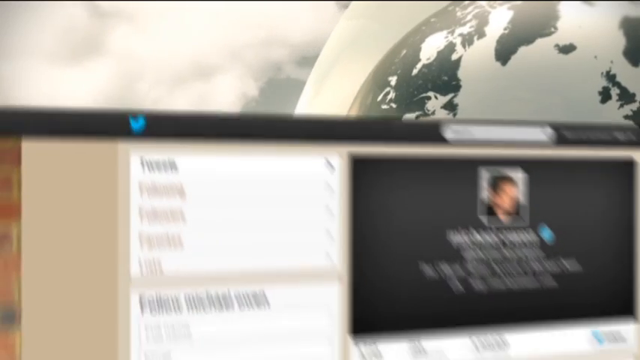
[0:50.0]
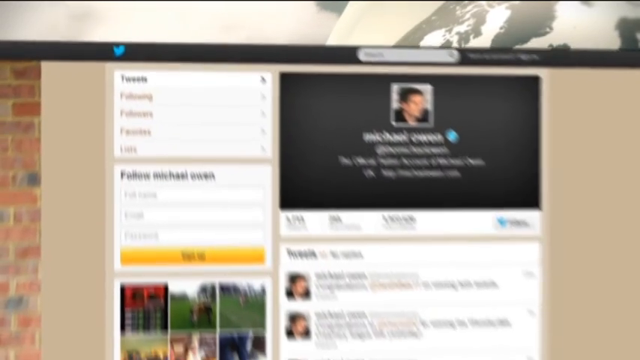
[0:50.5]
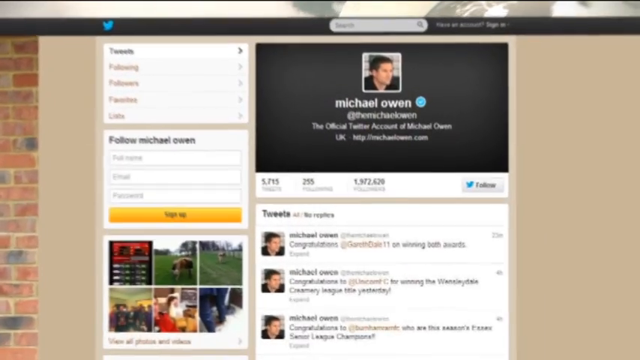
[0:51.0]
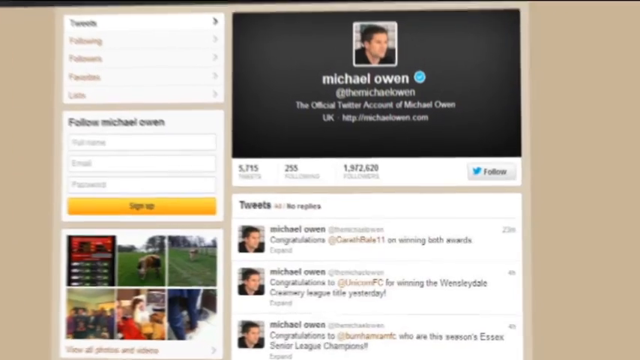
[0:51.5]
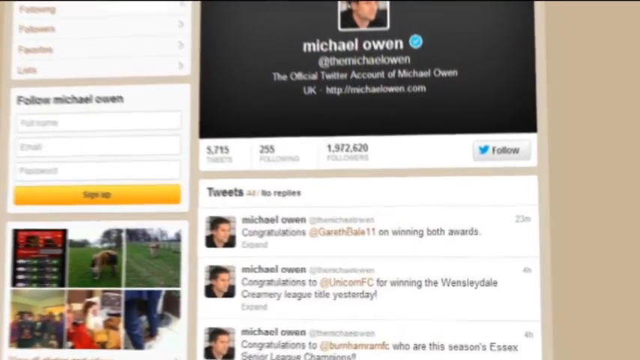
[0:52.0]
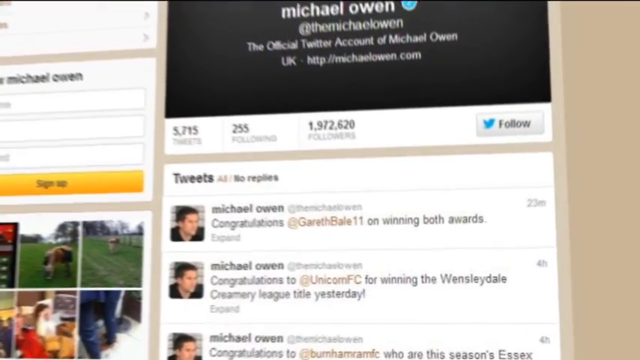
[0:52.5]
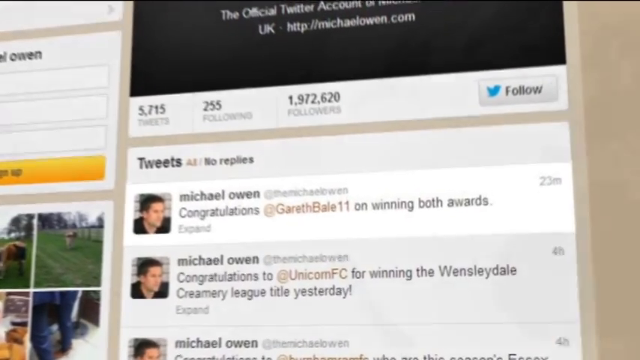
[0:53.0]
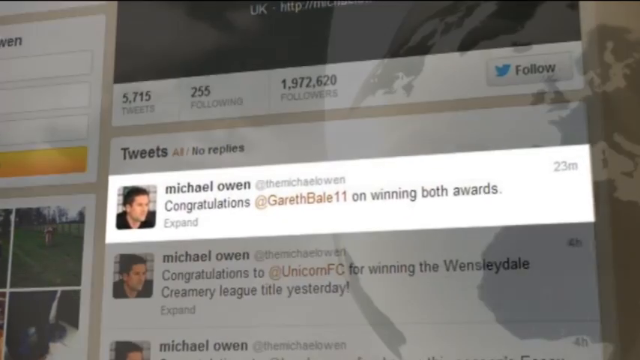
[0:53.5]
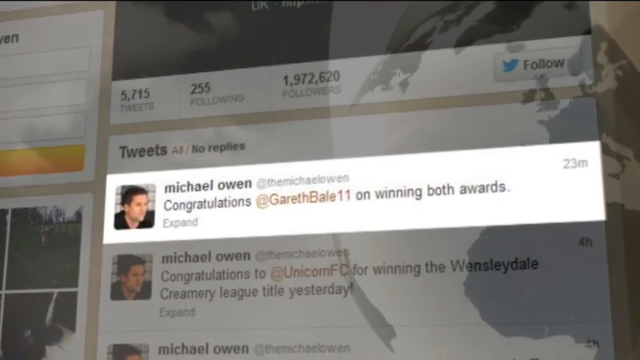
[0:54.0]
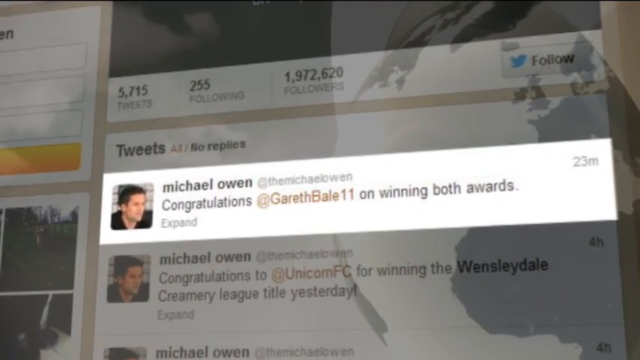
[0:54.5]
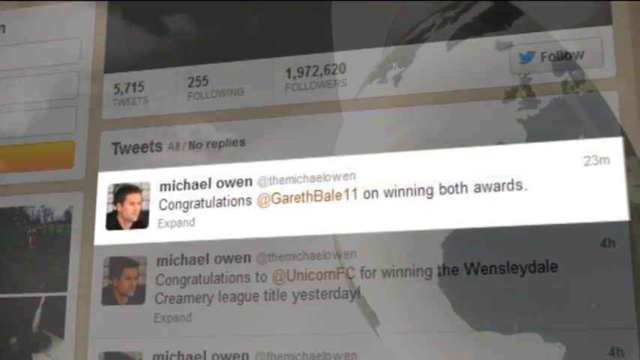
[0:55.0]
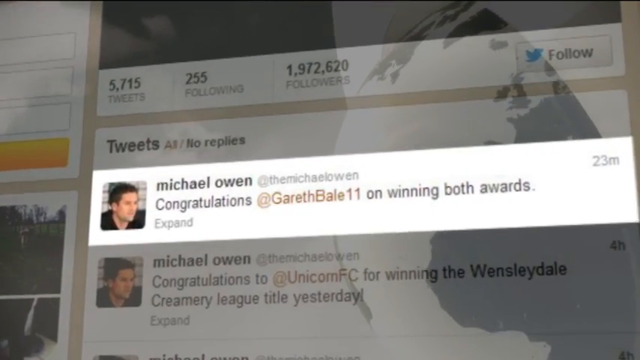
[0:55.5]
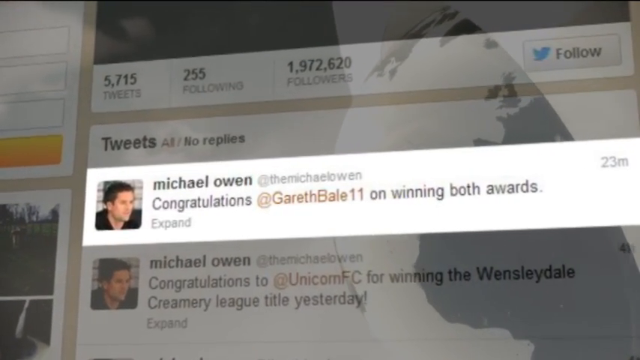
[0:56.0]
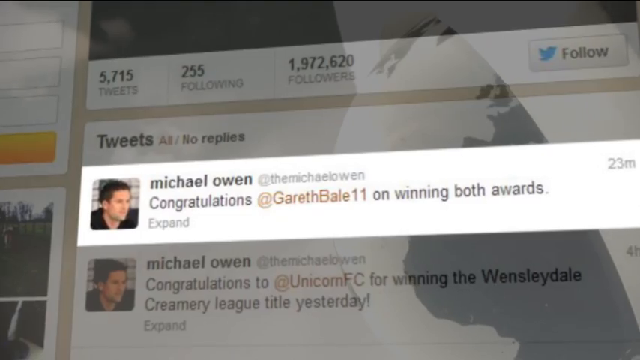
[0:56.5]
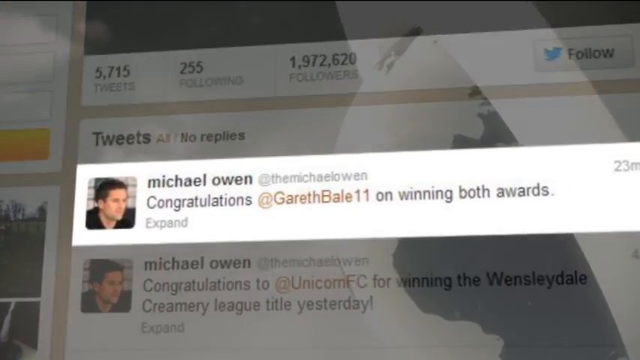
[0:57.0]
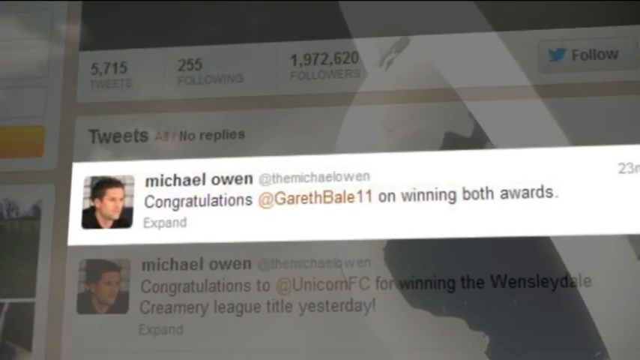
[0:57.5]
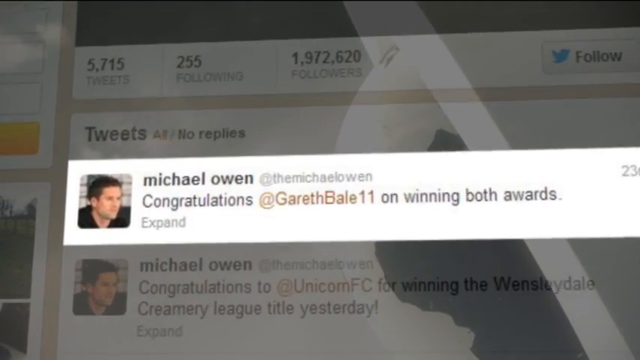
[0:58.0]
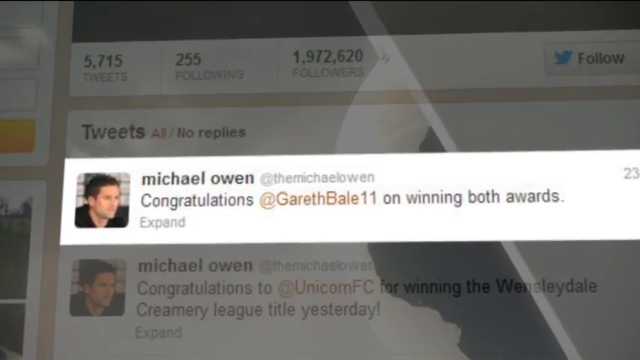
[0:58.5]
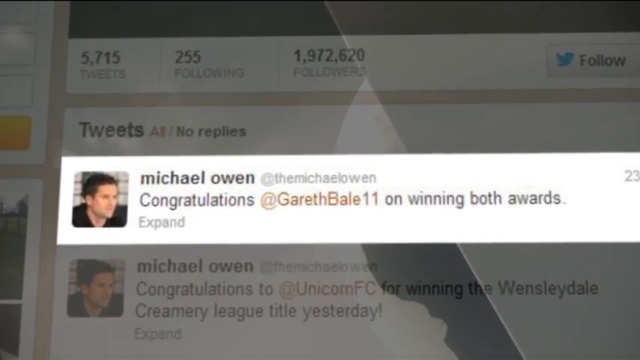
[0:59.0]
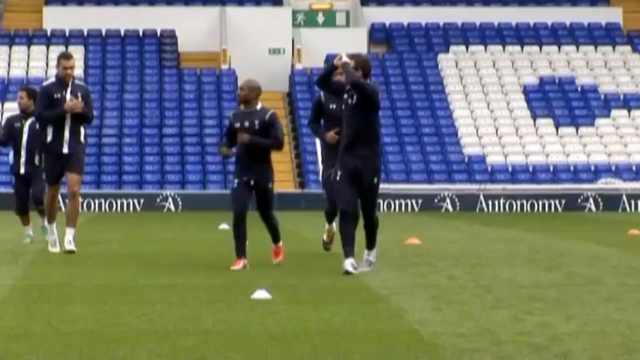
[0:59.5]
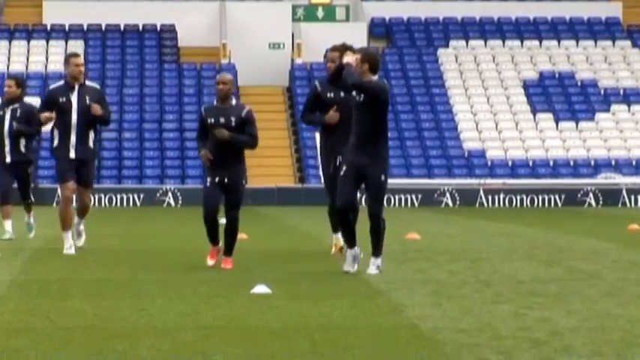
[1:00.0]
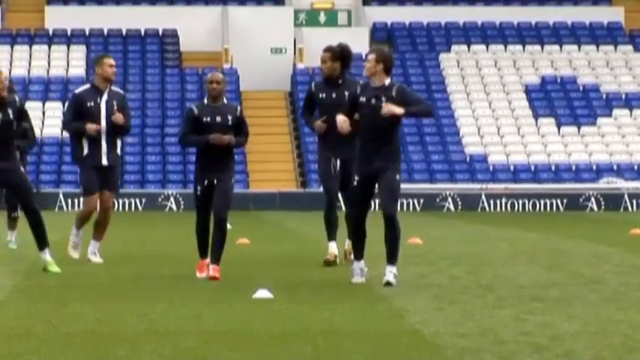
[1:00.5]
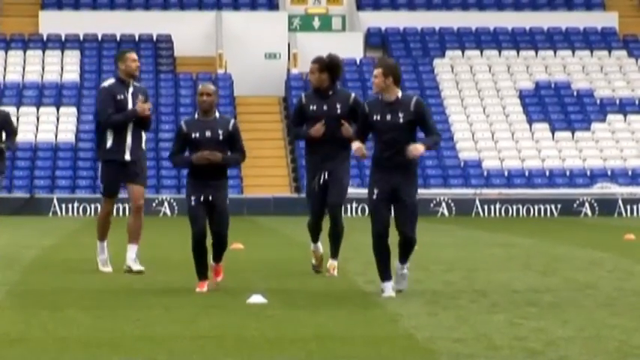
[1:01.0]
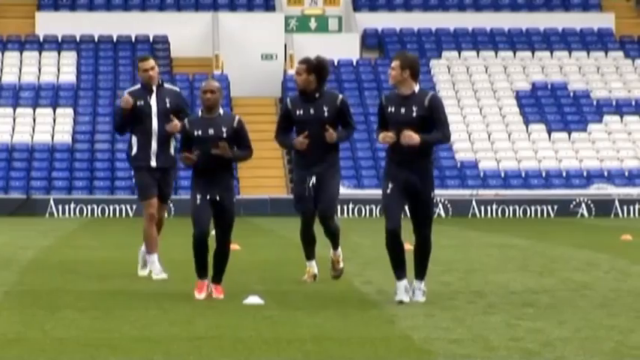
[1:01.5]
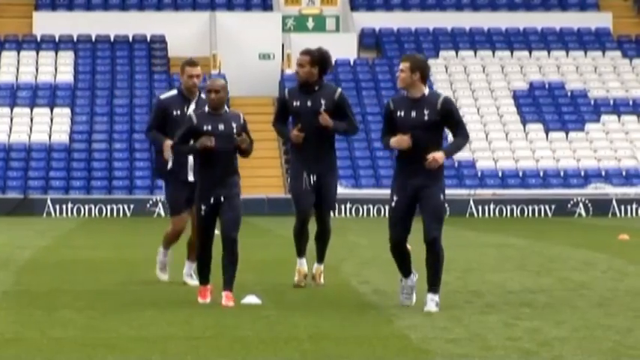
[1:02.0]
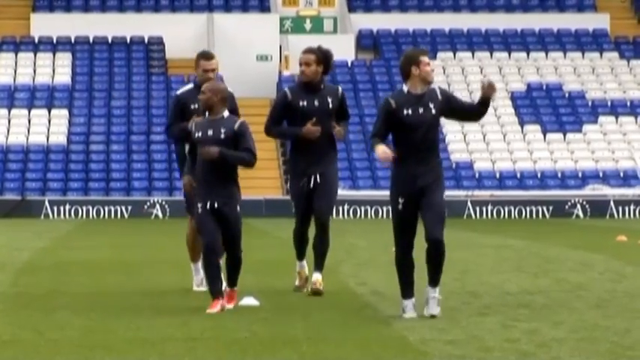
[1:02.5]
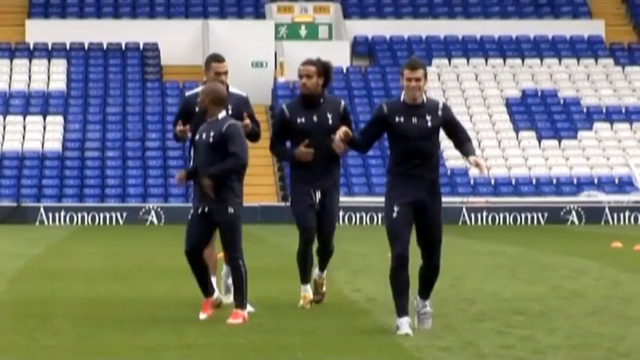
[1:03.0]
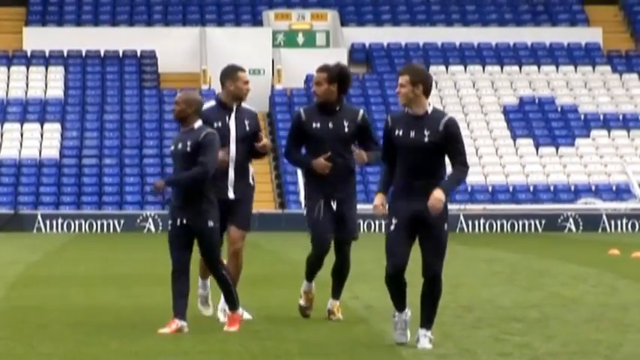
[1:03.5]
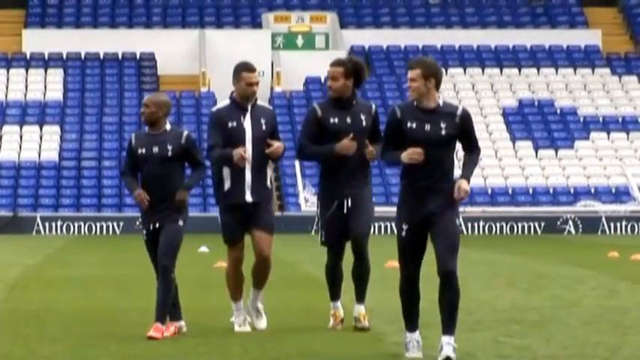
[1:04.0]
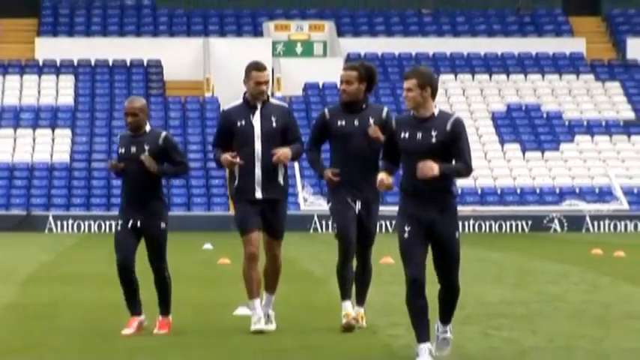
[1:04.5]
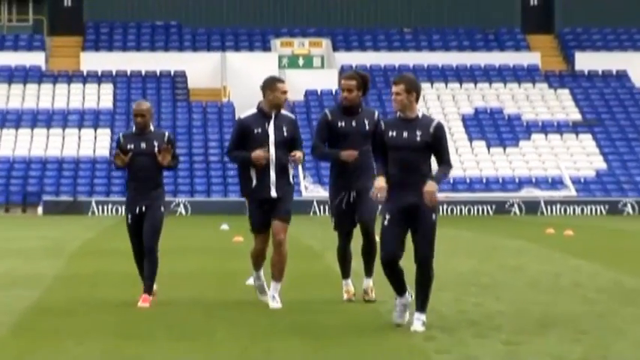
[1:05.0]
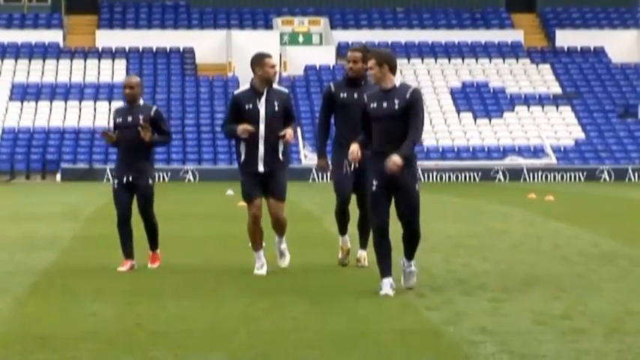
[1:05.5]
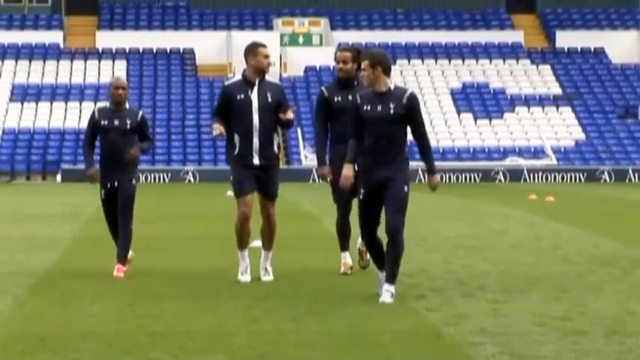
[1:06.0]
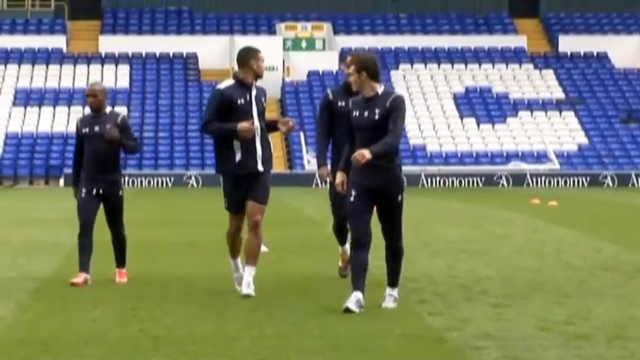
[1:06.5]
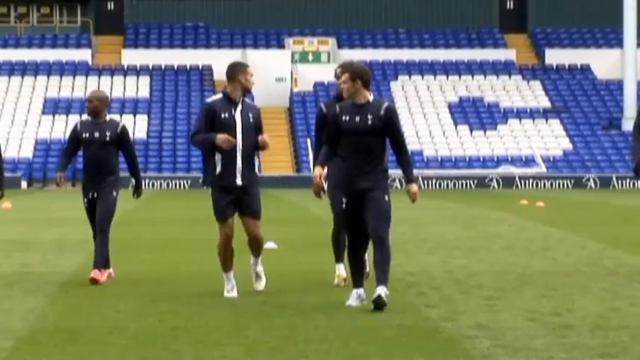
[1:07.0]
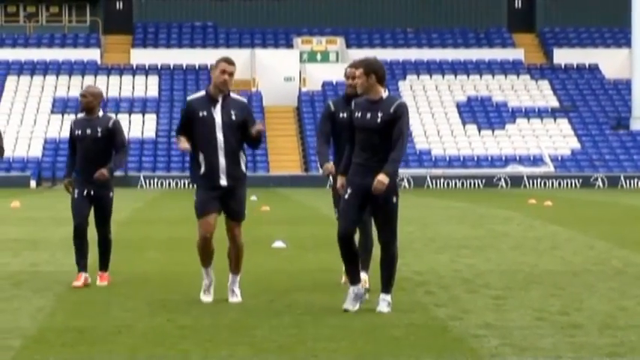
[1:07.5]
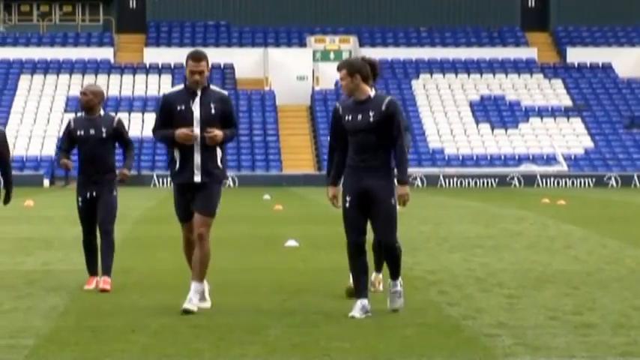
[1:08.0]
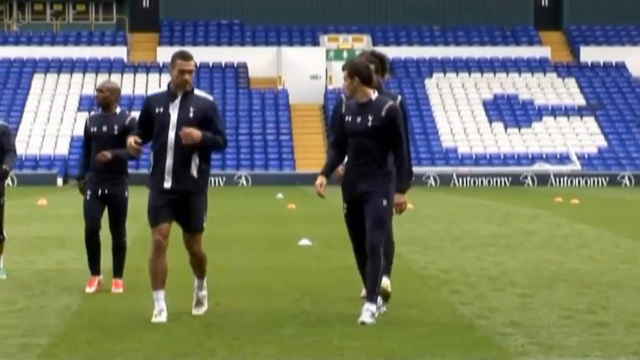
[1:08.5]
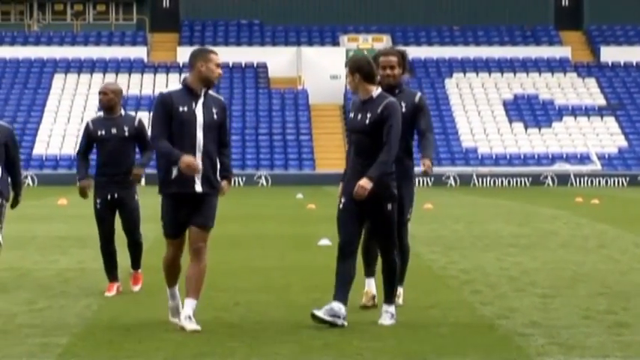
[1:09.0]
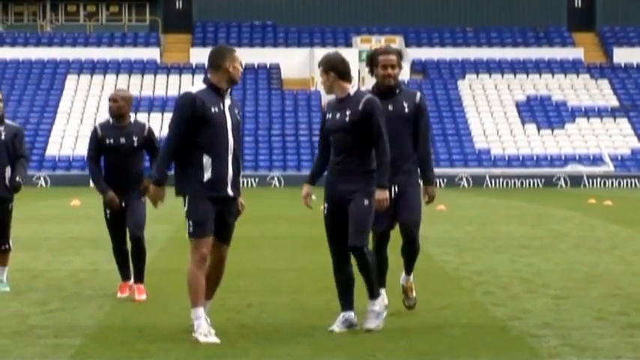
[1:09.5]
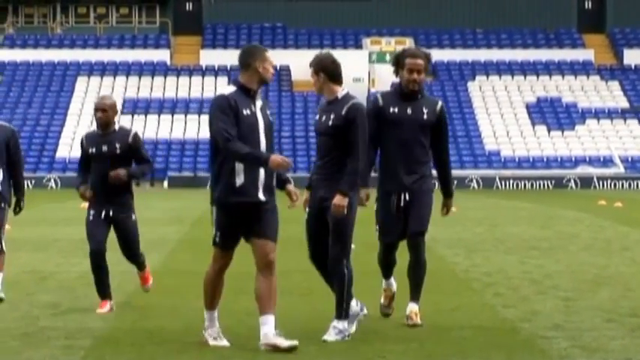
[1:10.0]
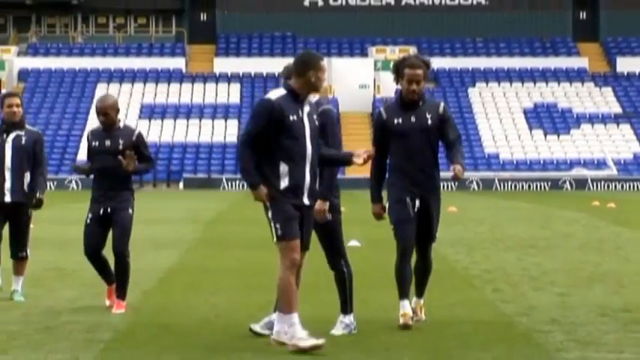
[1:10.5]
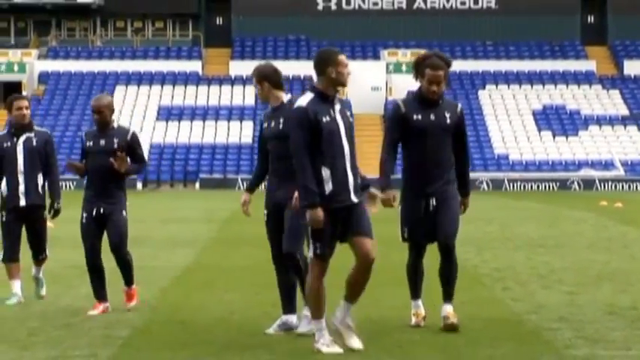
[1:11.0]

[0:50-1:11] The next Twitter feed is Michael Owen's. His Twitter page screenshot appears with the same kind of graphics, with the world moving in the background. The view slowly moves to his last tweet, which congratulates Gareth Bale 11 on winning both awards. The video zooms in on this tweet and moves around it a little. The video then cuts to the training ground at the Hotspur Stadium, where Gareth Bale and three other Tottenham Hotspur players train on the pitch, possibly before a game or during the week. The three other players are black. One, with long hair, looks to the right; one, bald and short, looks forward; one looks to the left, and Bale also looks to the left. They all run in the same direction, towards the screen, and there are little cones on the ground. They seem happy, talking to each other, looking this way and that, and moving their arms around as they slowly jog forward. One player stops and the other three also come to a halt, and while speaking to each other they sort of move out of the screen.